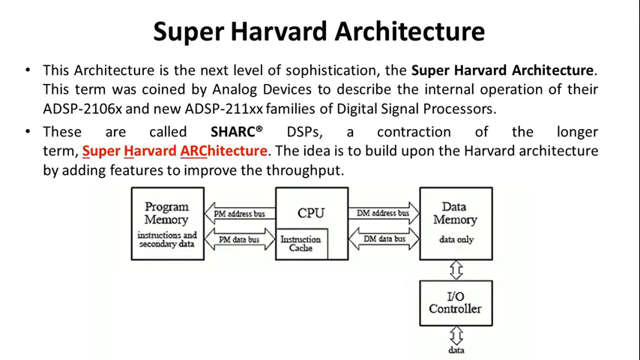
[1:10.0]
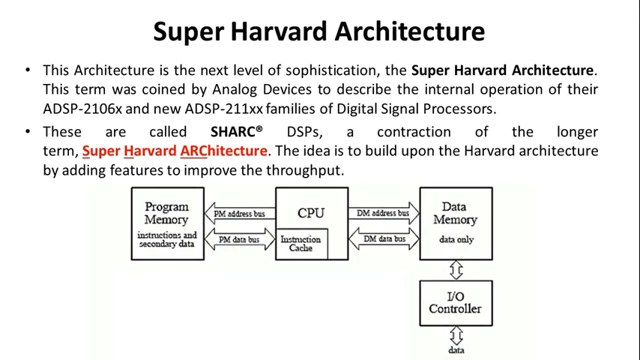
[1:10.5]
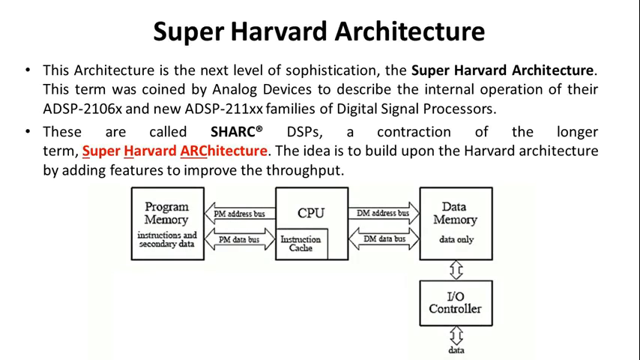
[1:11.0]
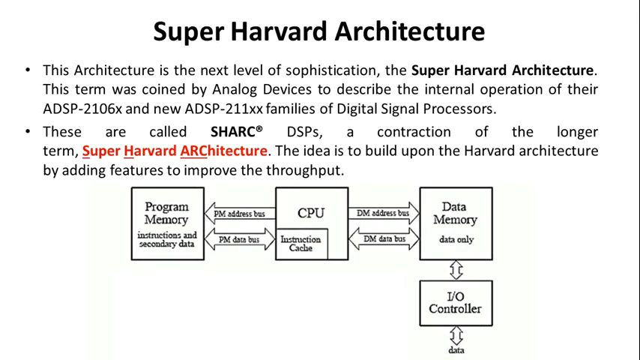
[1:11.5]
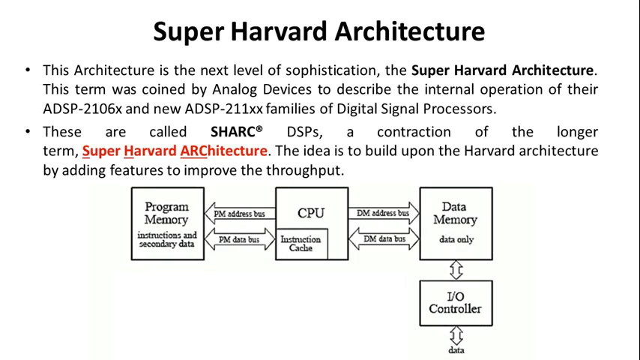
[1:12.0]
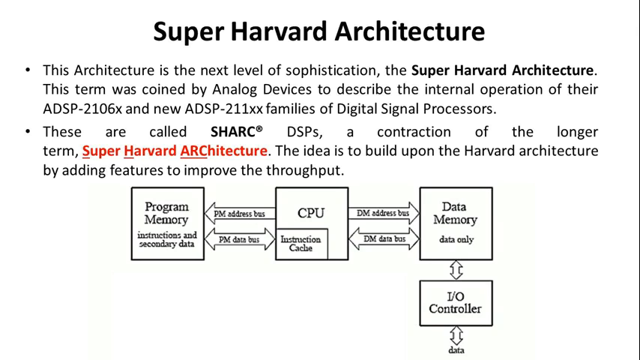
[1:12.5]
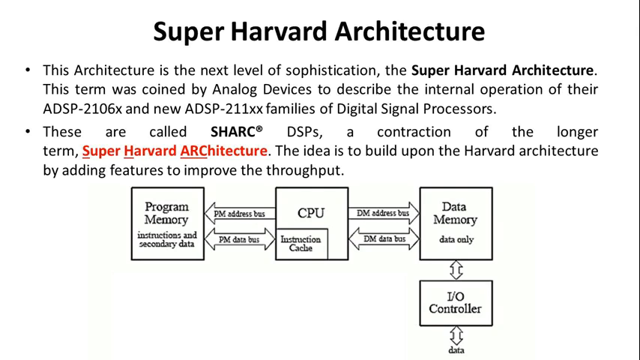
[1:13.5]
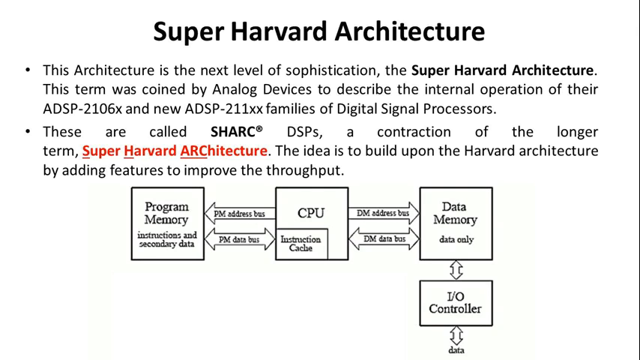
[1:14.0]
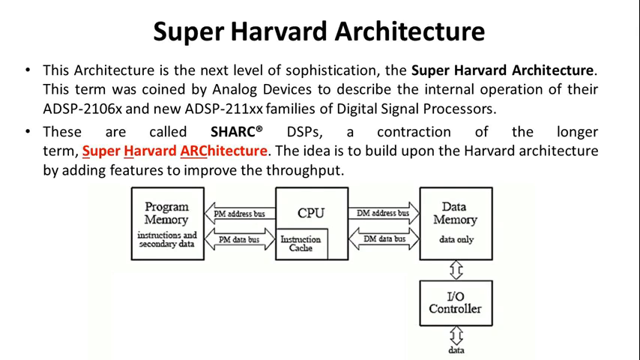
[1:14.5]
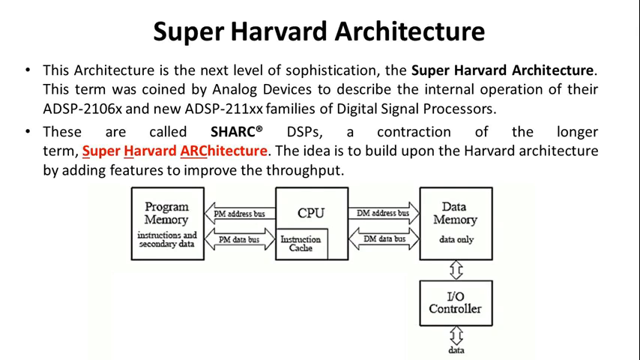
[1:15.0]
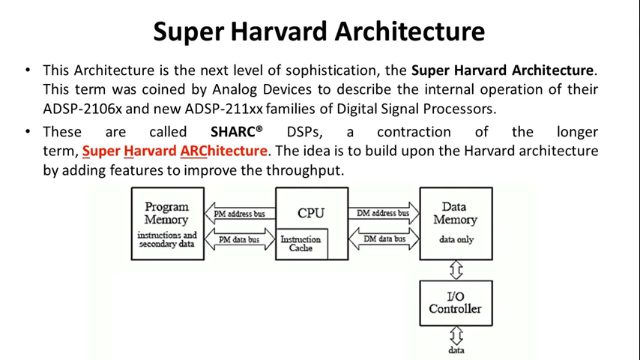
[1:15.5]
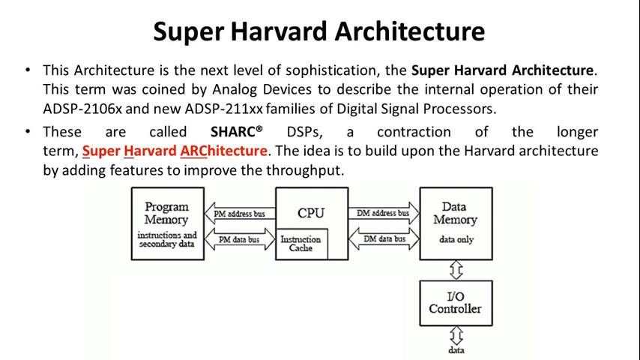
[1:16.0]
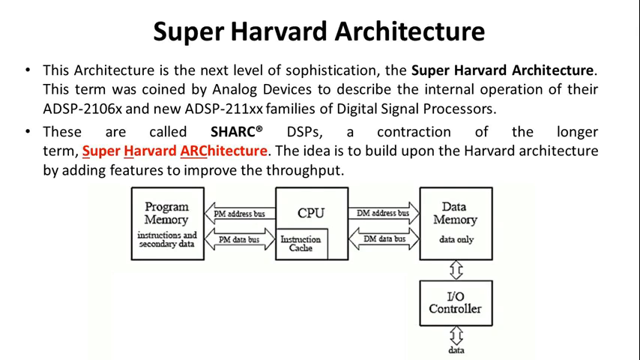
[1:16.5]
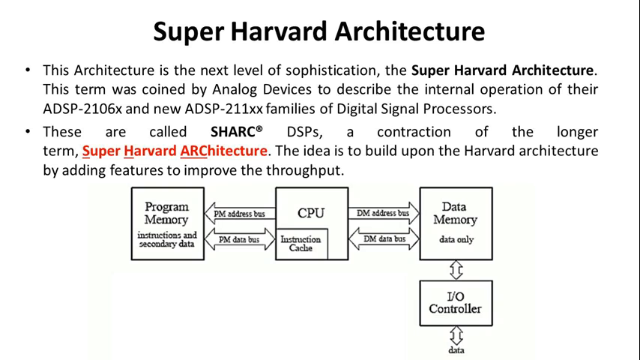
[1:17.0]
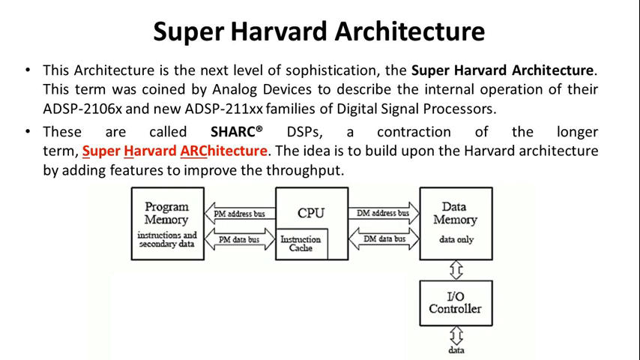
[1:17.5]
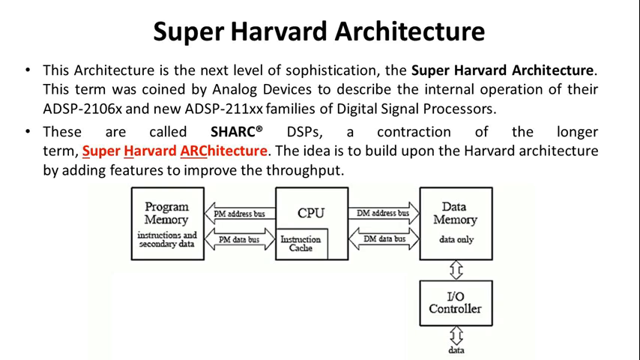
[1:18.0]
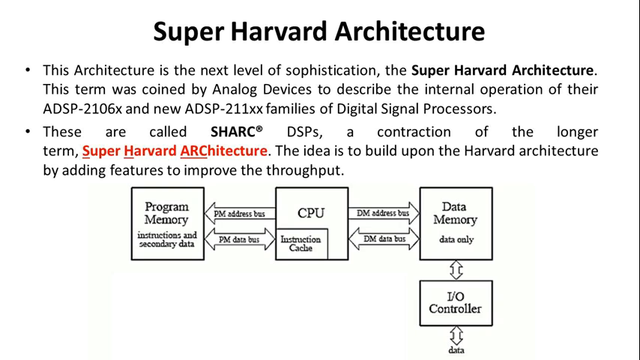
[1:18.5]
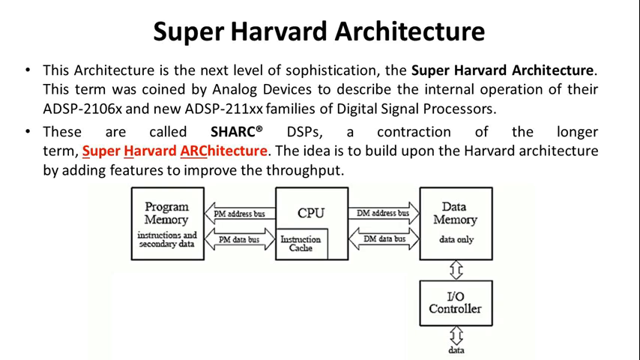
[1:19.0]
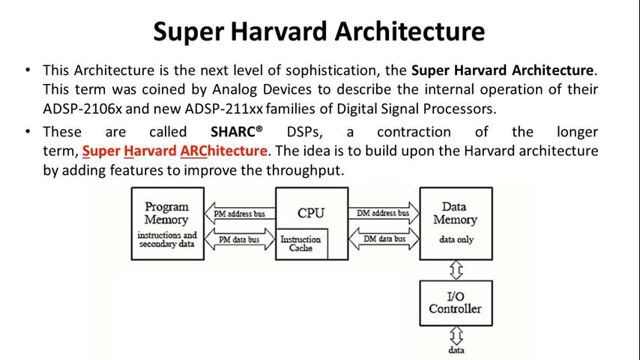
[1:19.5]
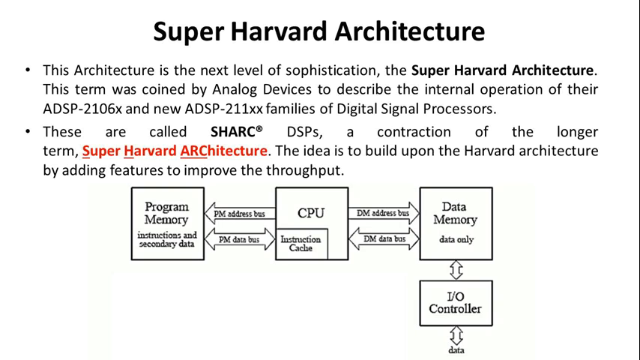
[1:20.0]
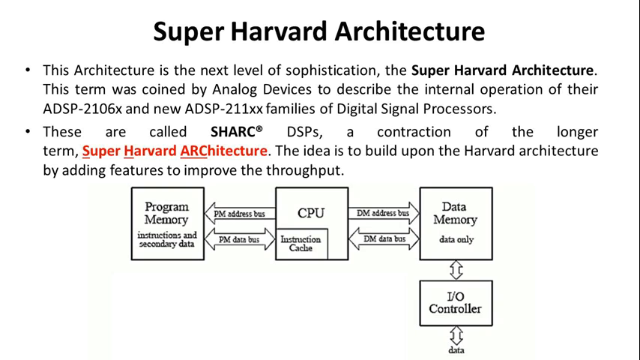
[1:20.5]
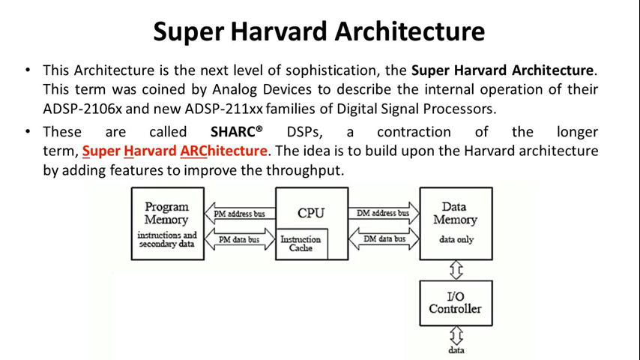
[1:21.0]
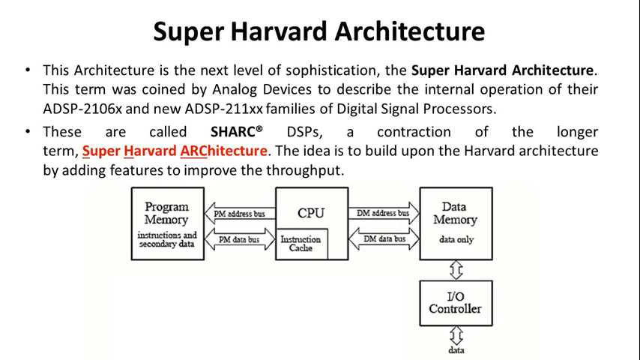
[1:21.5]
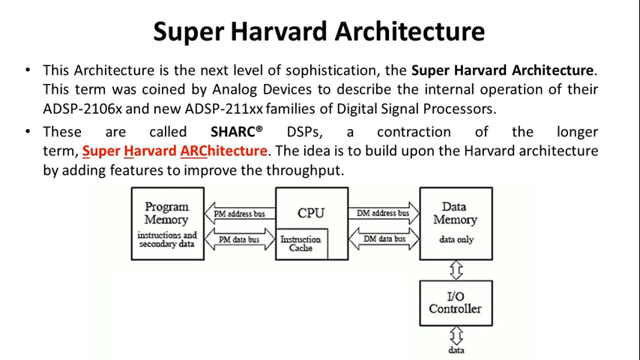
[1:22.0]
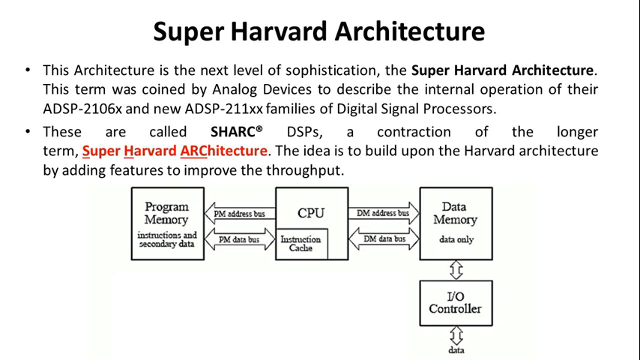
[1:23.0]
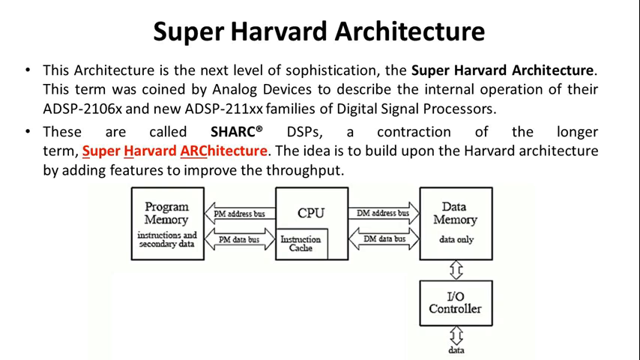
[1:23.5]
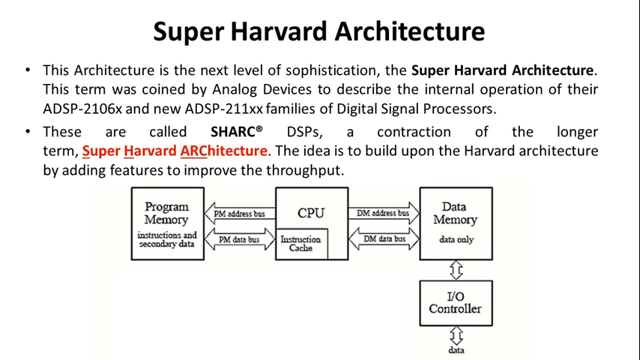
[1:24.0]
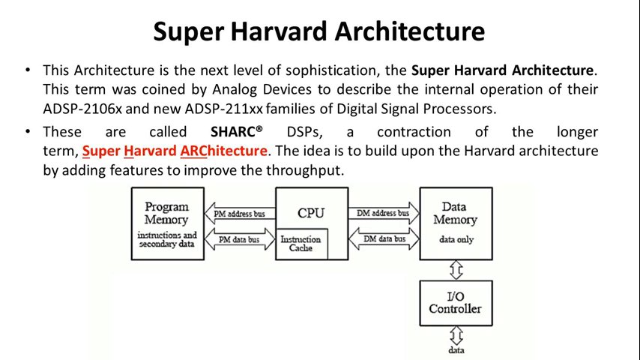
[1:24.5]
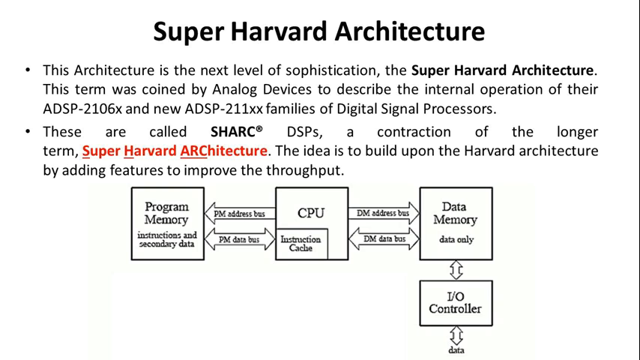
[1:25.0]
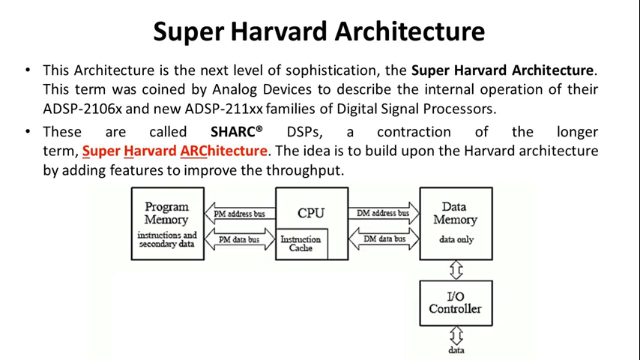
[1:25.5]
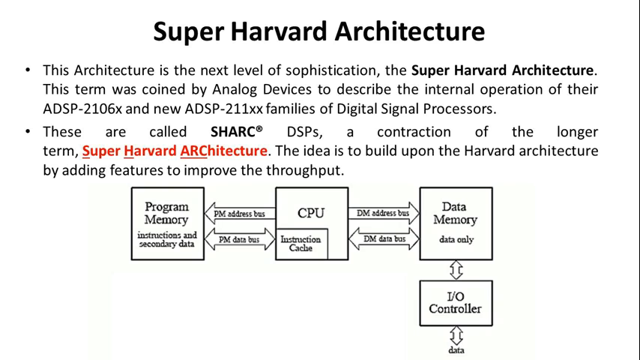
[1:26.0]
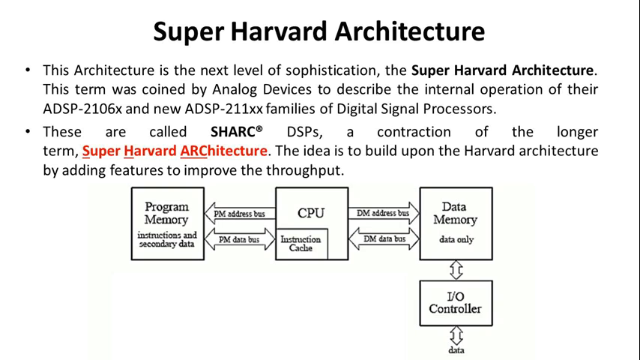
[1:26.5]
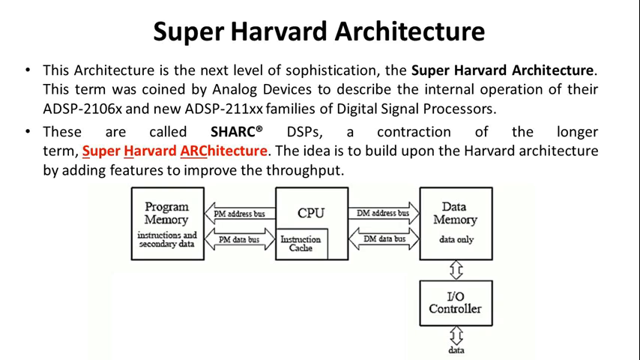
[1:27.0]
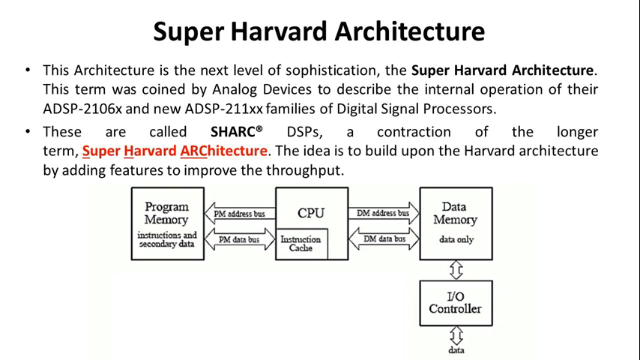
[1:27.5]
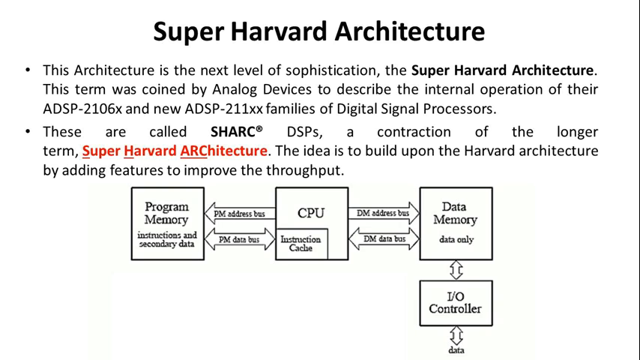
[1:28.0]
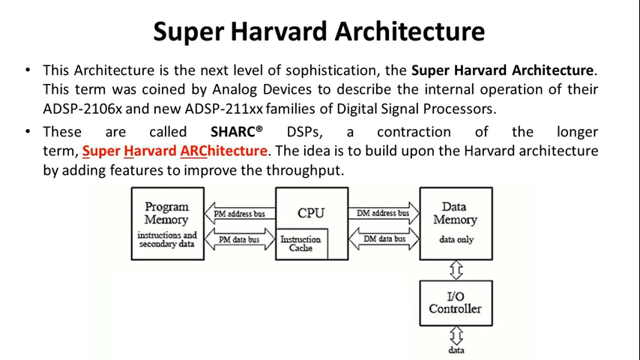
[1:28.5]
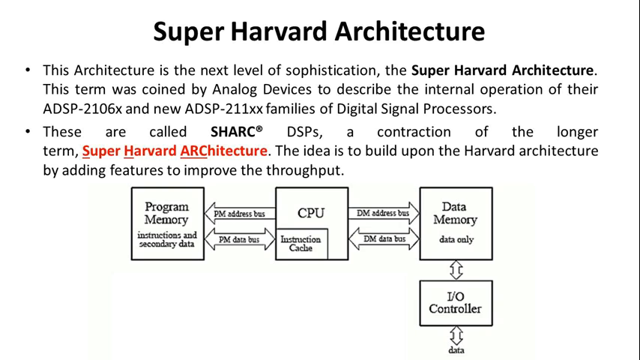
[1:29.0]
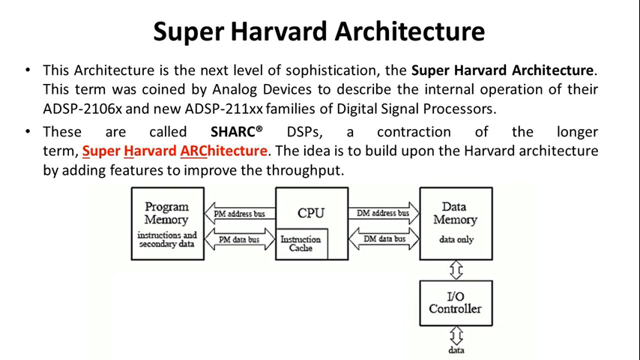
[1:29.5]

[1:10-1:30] Black text on a white background shows the title "Super Harvard Architecture," which is larger than the rest of the text and centered. Two dot-jots give information about this architecture, identifying it as the next level of sophistication. The text states who the term was coined by, that these are called SHARC DSPs, a contraction of the longer term Super Harvard Architecture, and that the idea was to build upon the Harvard Architecture by adding features to improve the throughput. A diagram shows four boxes: the box on the left is titled "Program Memory," the box in the middle is called "CPU" and has a small inset box called "Instruction Cache," the box on the right has the words "Data Memory," and below the Data Memory box is another box called "I/O Controller." Arrows run between the boxes, and the arrows are labeled as well.